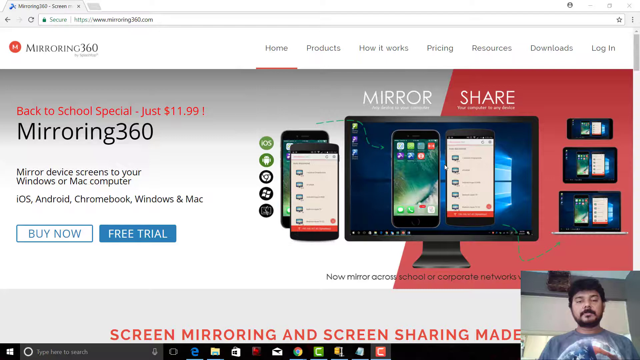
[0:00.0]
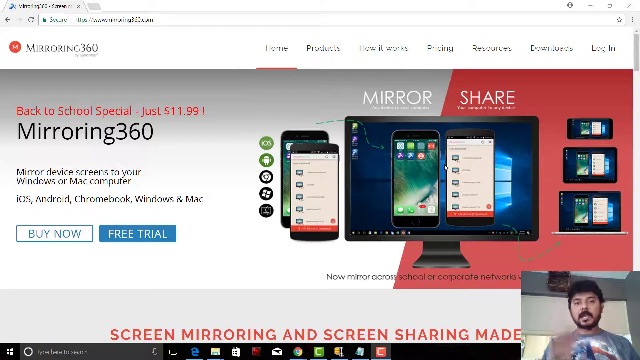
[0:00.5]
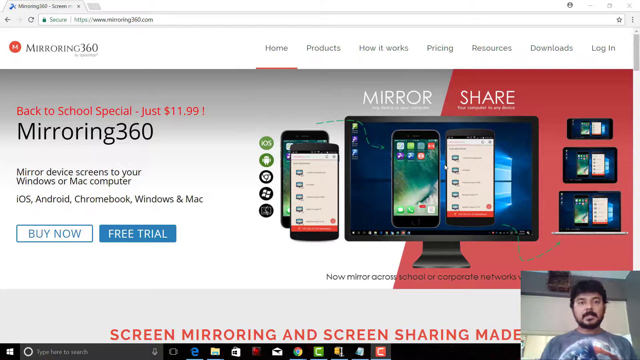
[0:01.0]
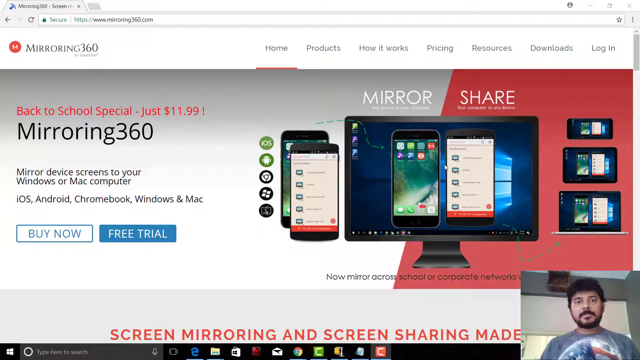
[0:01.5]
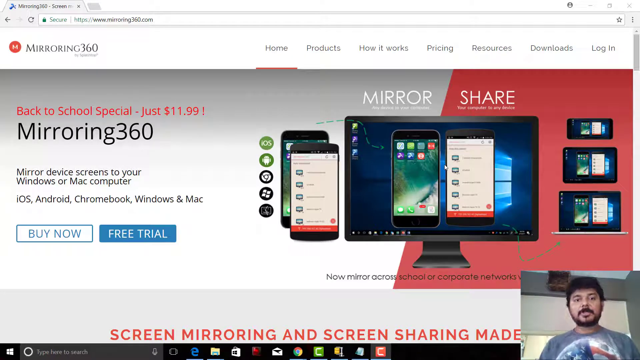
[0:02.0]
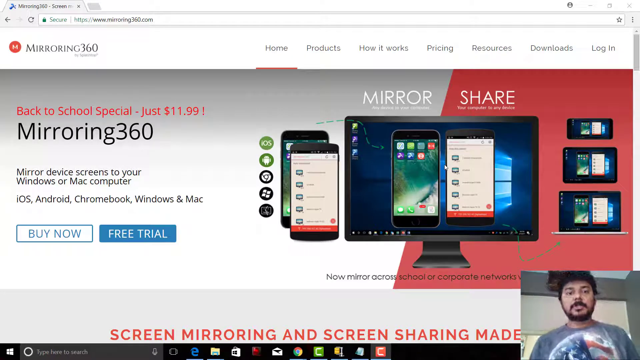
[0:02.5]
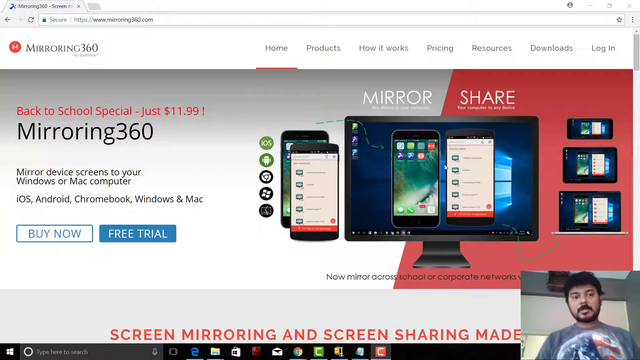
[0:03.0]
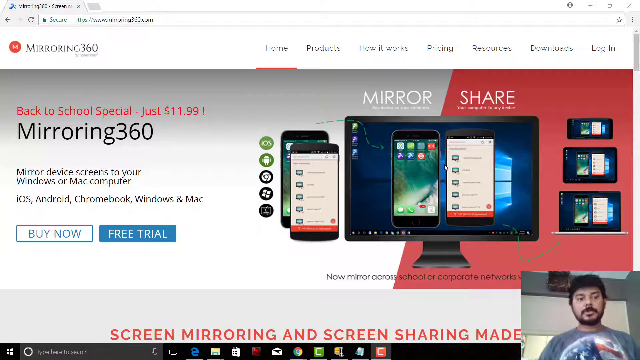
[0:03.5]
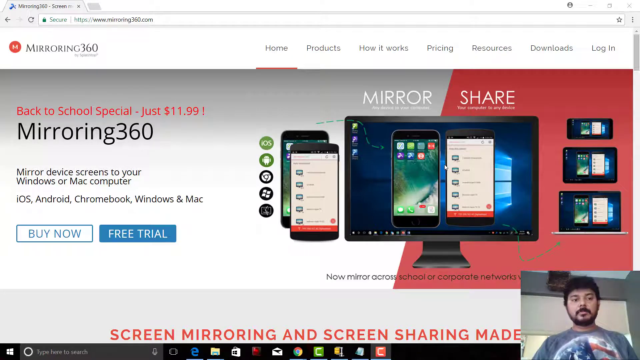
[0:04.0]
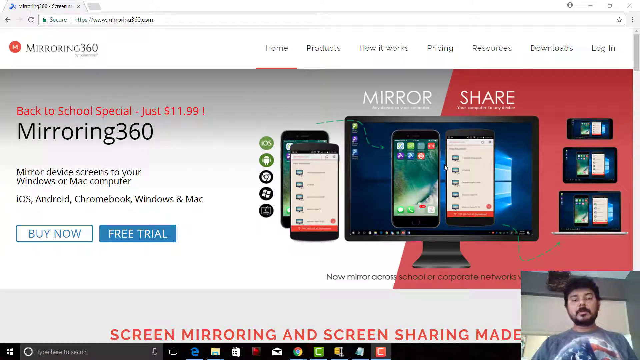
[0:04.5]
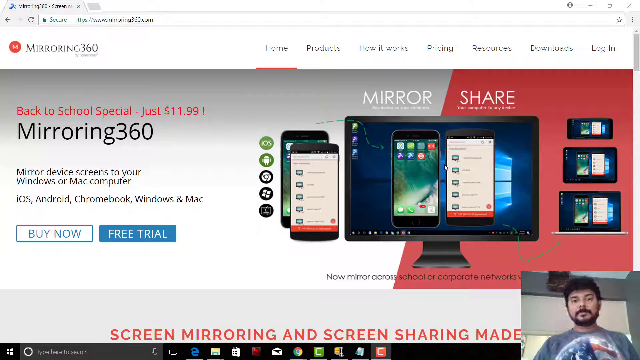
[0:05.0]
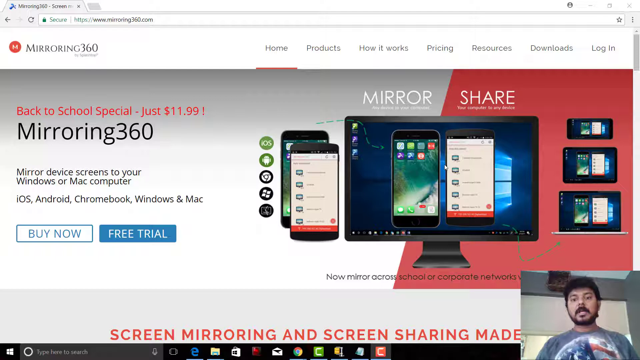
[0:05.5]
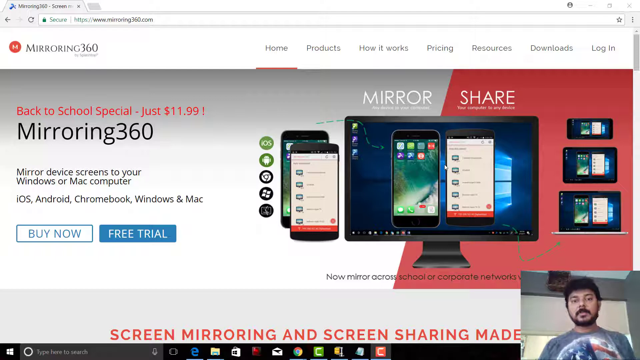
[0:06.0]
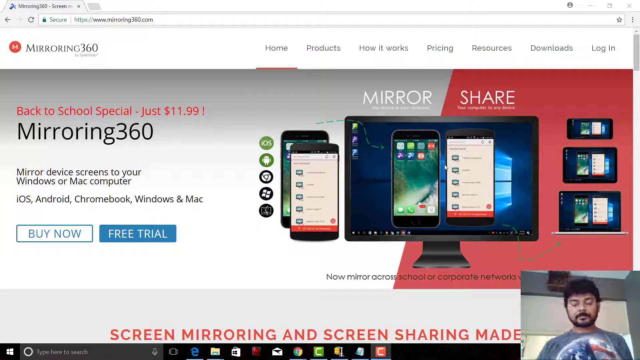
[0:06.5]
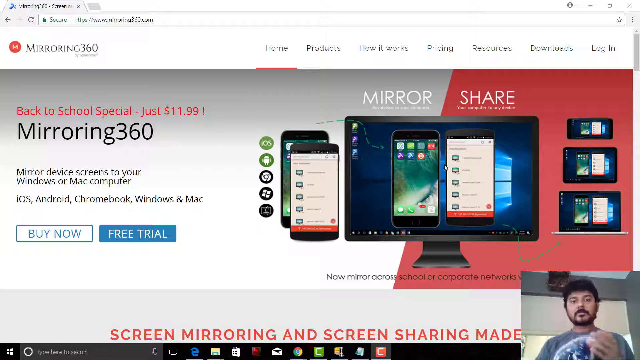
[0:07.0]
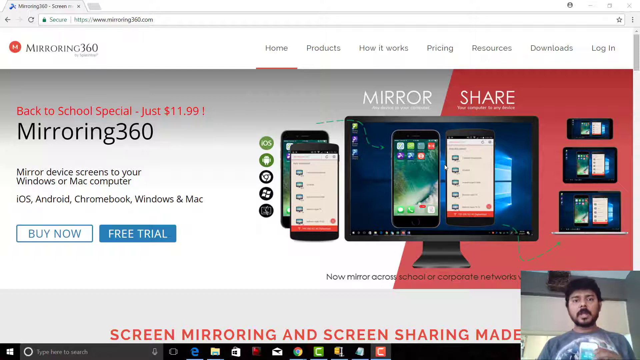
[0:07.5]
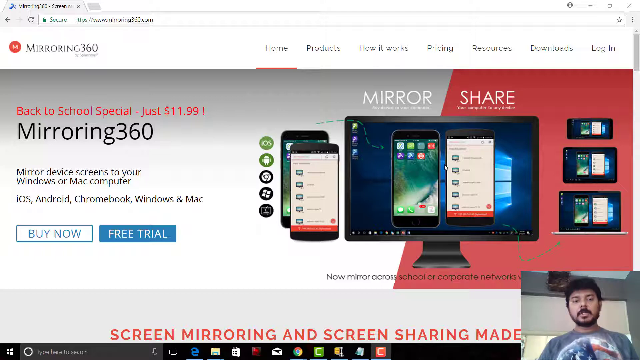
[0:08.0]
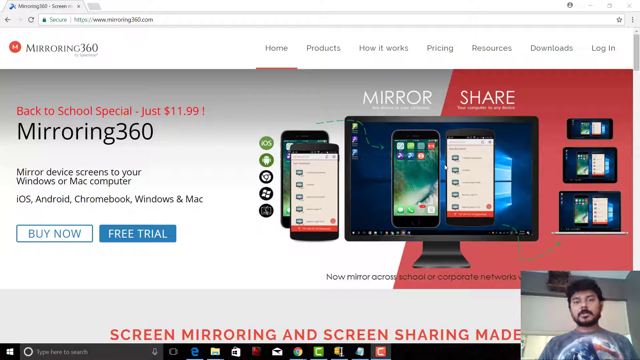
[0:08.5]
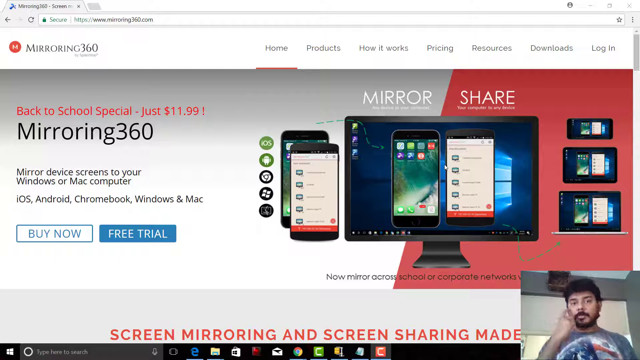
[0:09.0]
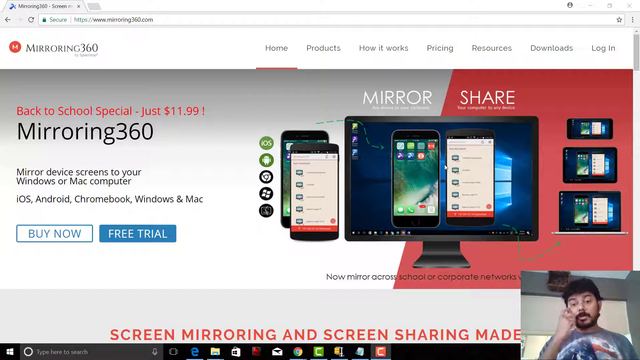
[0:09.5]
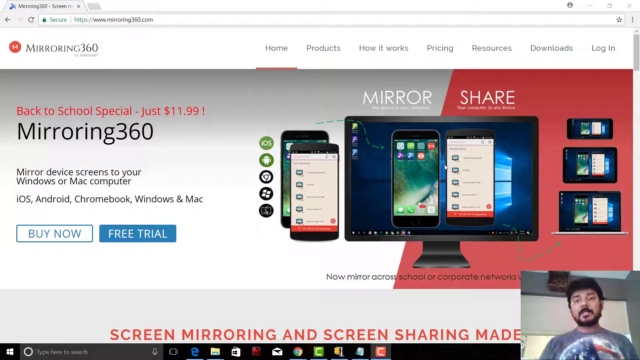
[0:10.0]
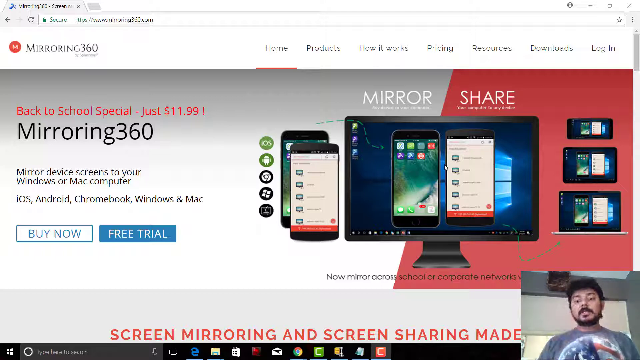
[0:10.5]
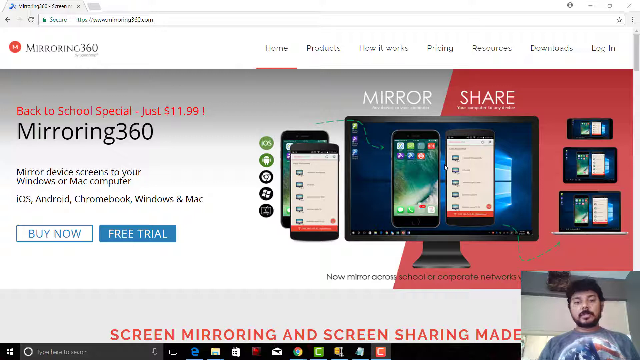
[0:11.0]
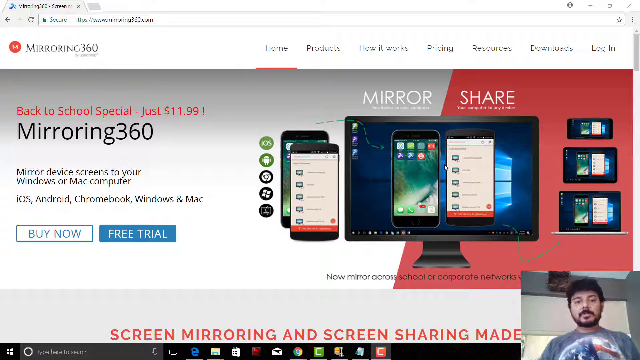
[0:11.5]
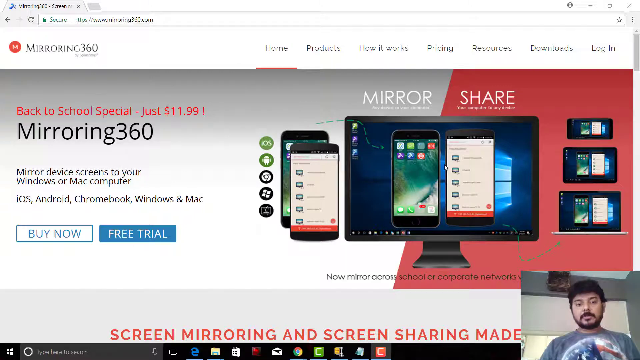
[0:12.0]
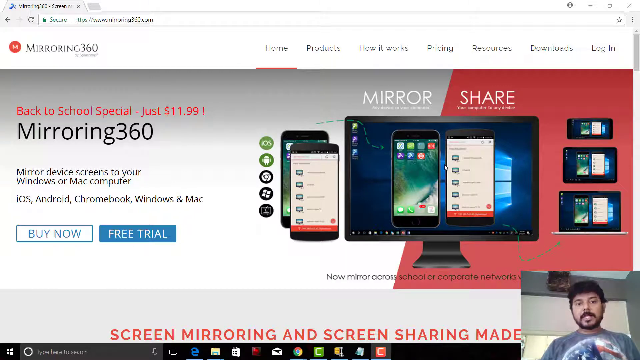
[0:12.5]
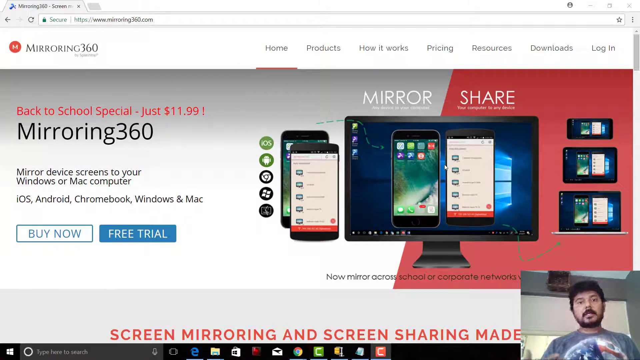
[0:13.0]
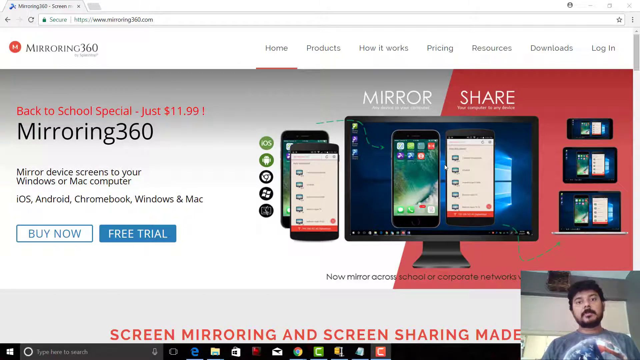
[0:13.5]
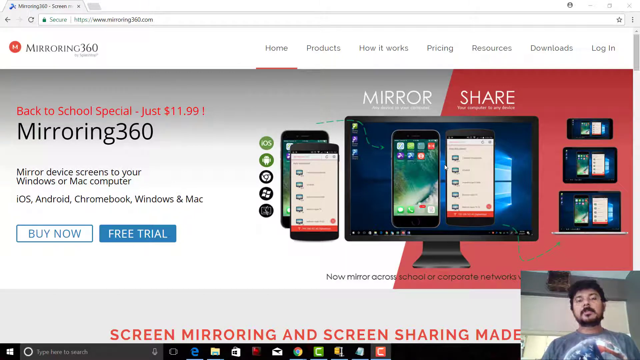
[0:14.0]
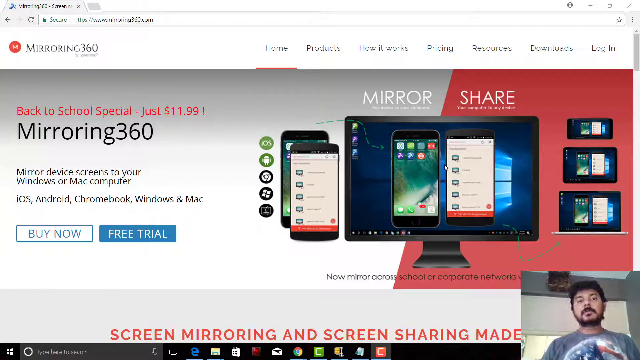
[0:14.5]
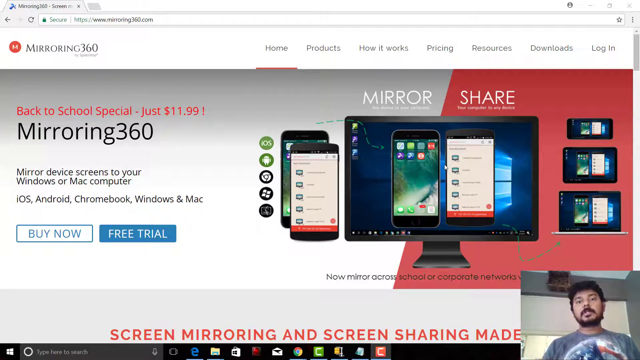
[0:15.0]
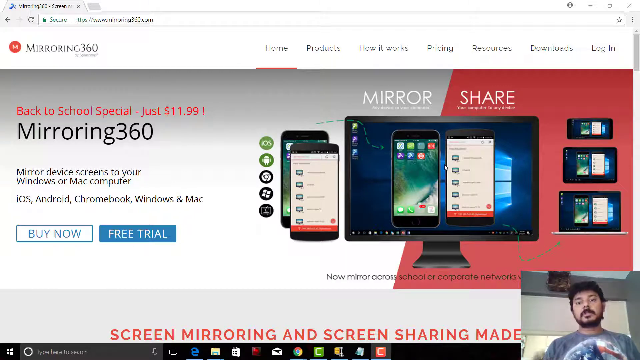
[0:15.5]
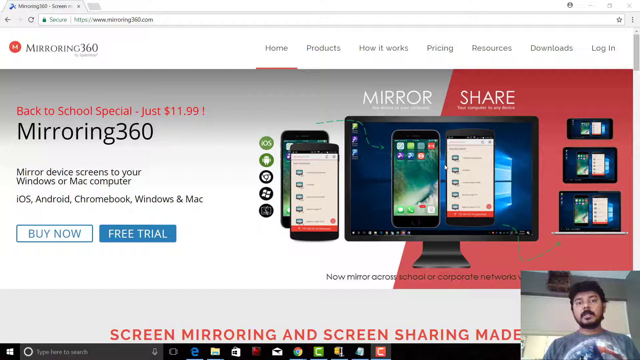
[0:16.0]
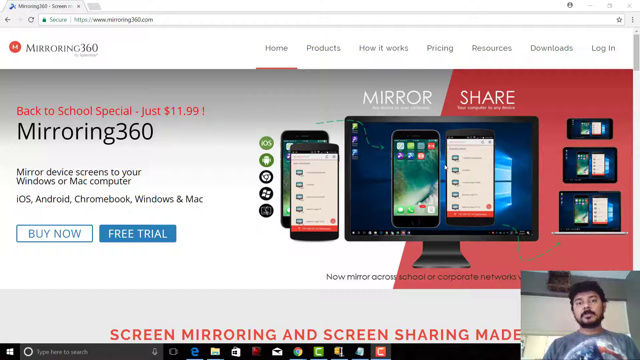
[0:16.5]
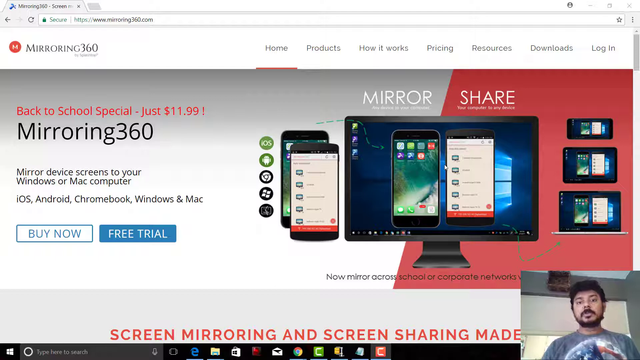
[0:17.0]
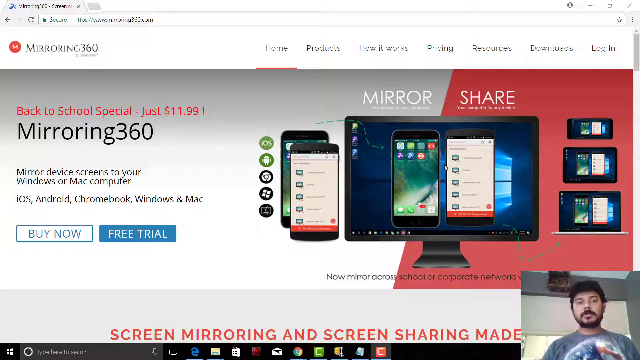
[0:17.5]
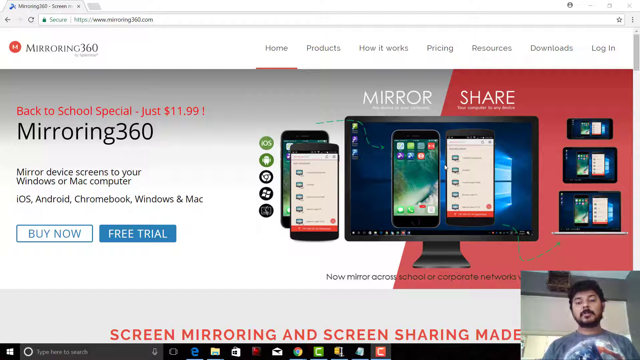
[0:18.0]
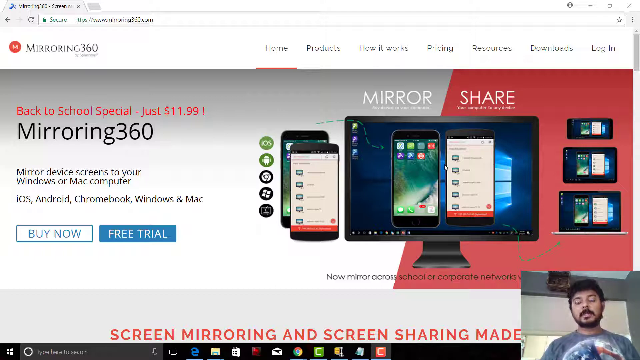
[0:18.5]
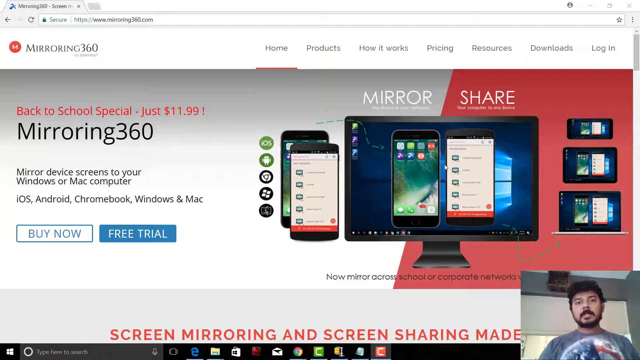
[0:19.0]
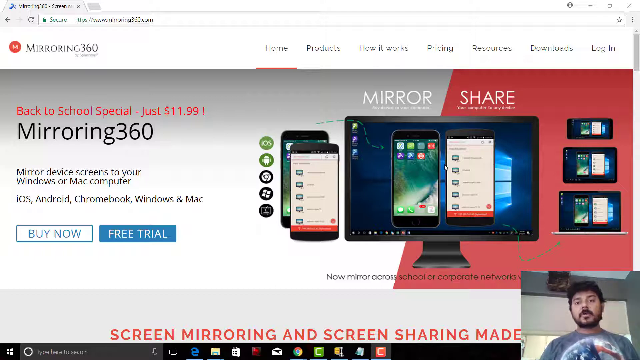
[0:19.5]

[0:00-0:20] A computer screen displays a page reading "back to school special just $11.99 for mirroring 360" and "mirror device screen to your Windows or Mac computer." It lists iOS, Android, Chromebook, Windows, and Mac, and offers options to buy it now or get a free trial. The computer screen is shown on the right, and in a tiny box in the very lower right portion of the screen a man is talking. He is Caucasian with dark hair and a brown beard and mustache, and he wears a gray t-shirt with something kind of like an American flag on it, except circular. His hand moves as he talks, and for a moment he holds up his cell phone. On the page there is a computer monitor in the middle with two cell phones off to the left, and three small boxes show how it all works.